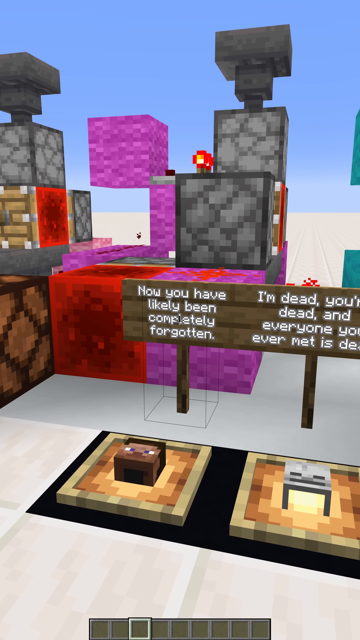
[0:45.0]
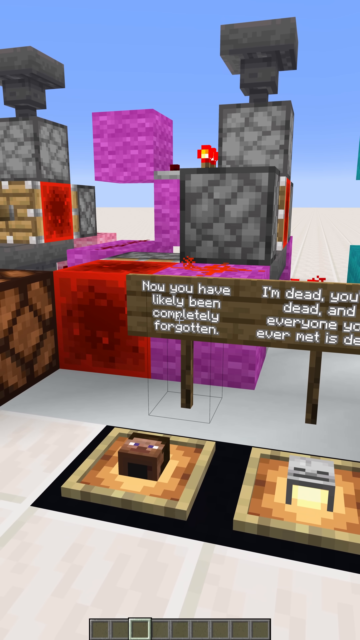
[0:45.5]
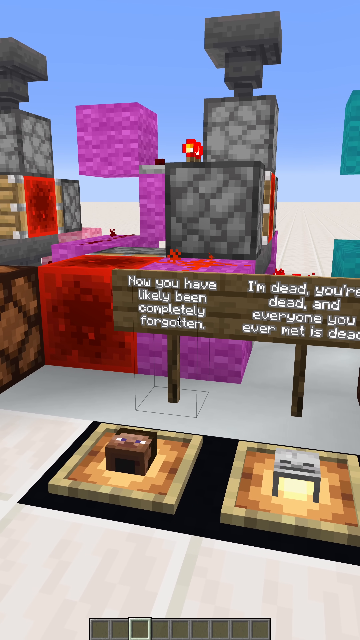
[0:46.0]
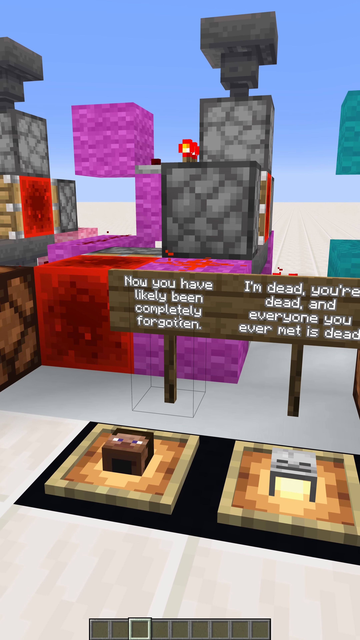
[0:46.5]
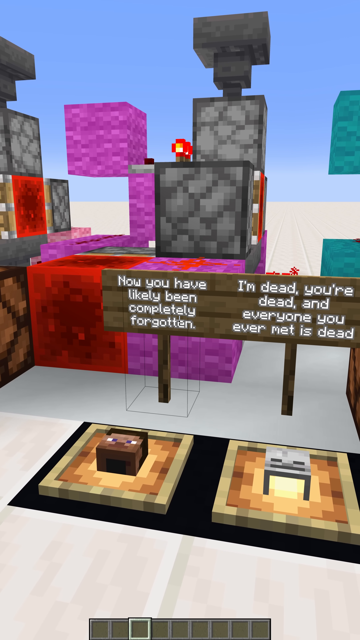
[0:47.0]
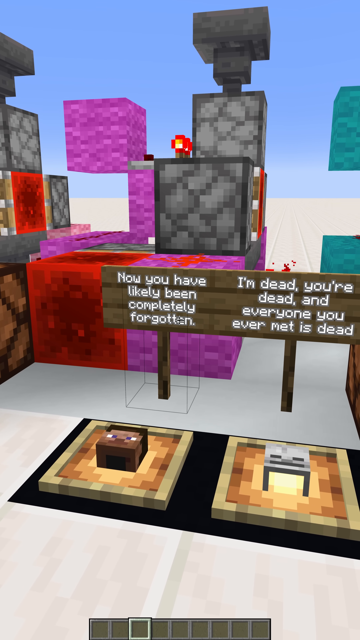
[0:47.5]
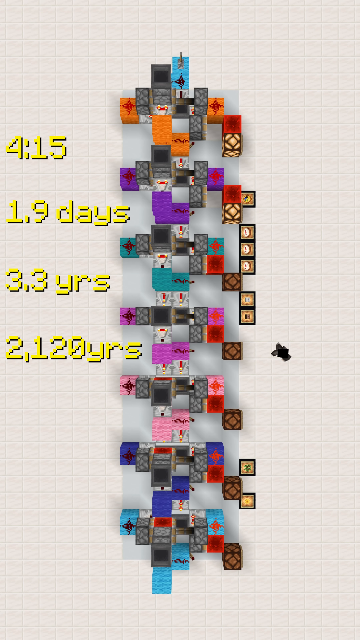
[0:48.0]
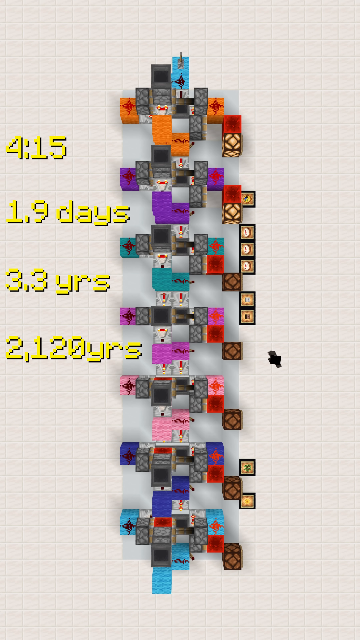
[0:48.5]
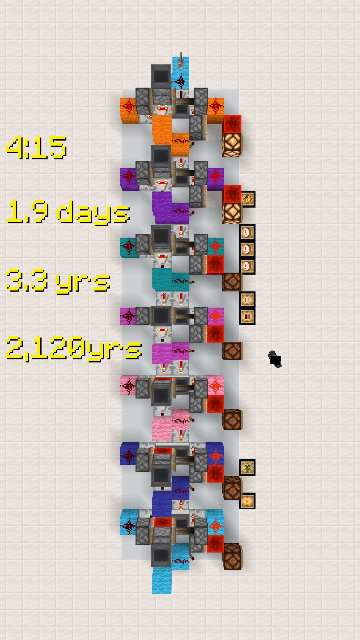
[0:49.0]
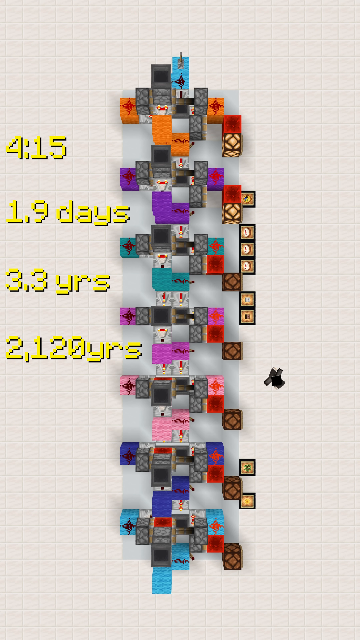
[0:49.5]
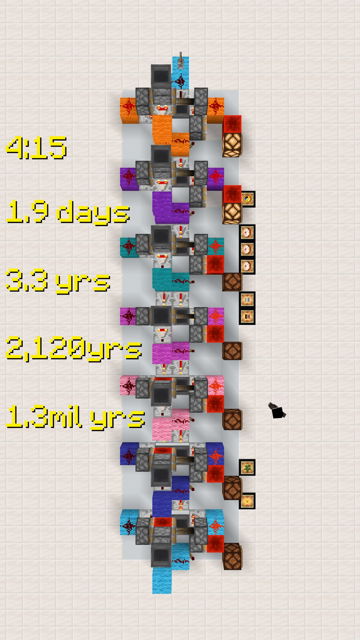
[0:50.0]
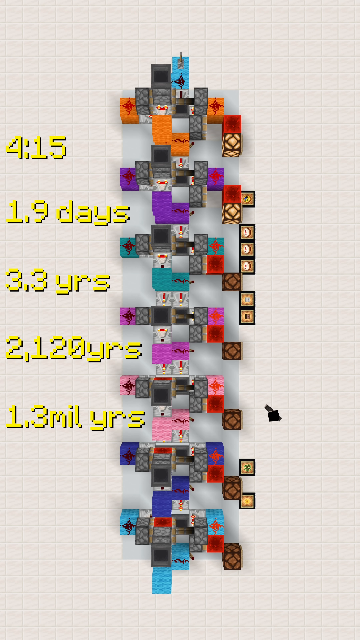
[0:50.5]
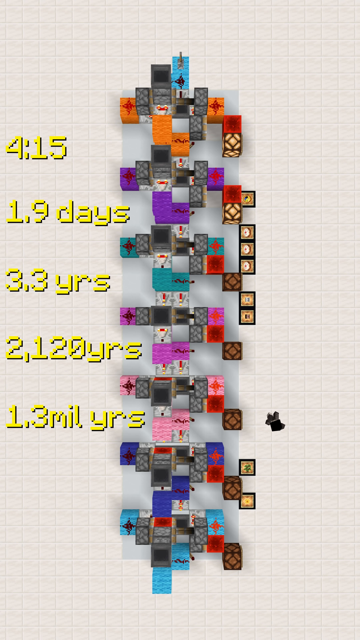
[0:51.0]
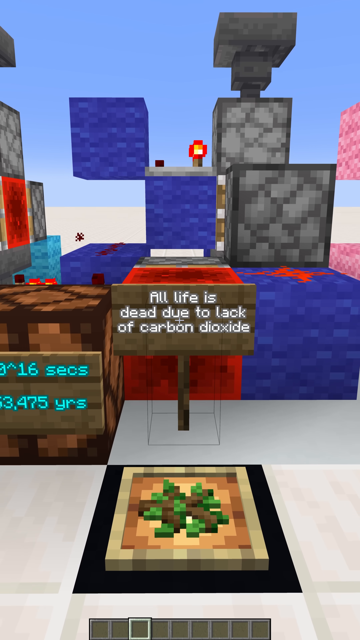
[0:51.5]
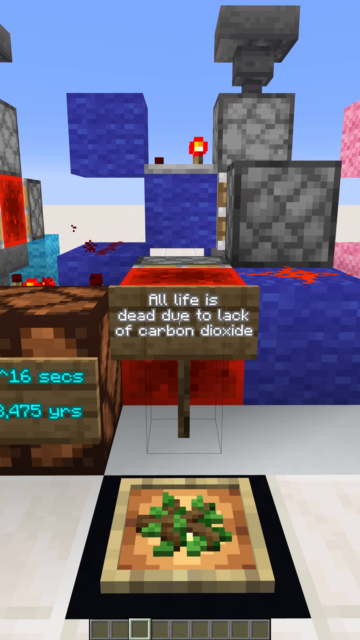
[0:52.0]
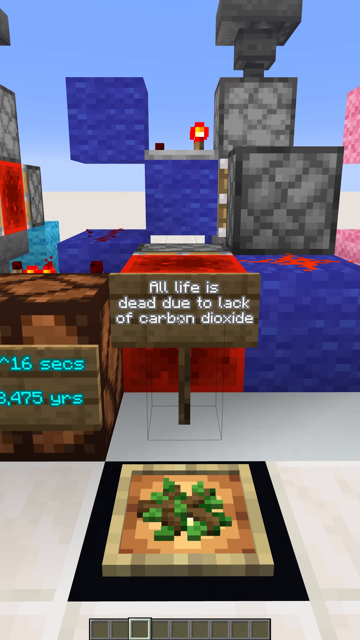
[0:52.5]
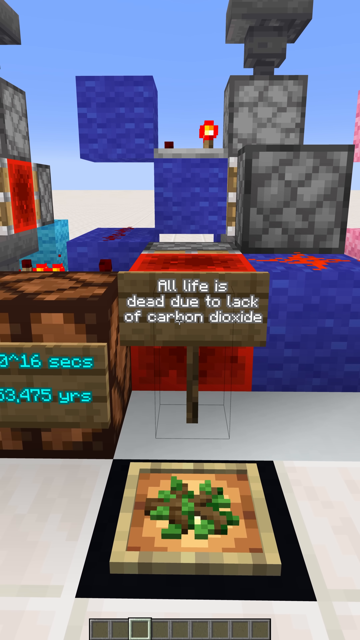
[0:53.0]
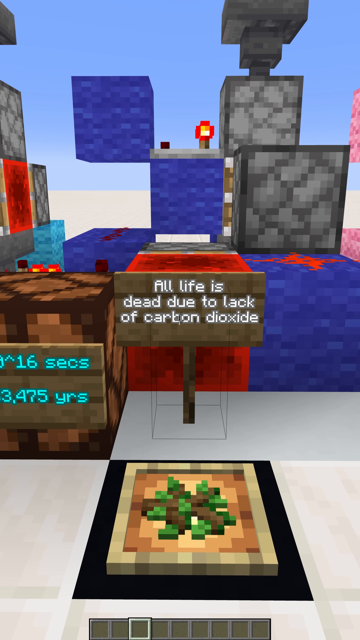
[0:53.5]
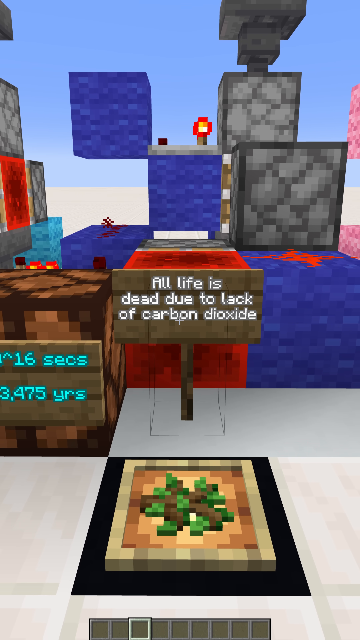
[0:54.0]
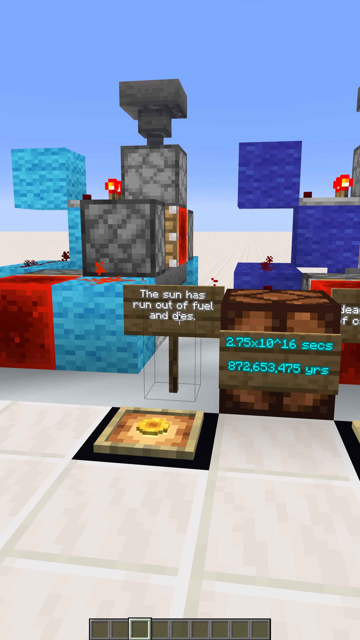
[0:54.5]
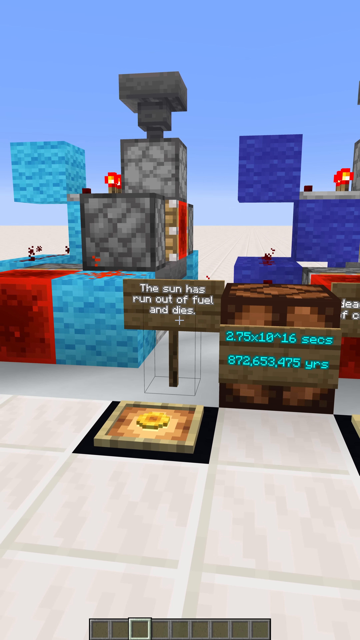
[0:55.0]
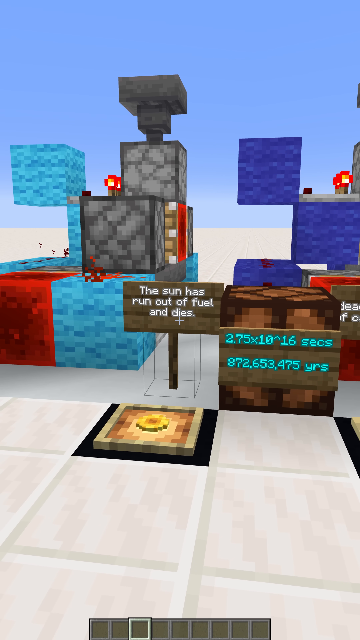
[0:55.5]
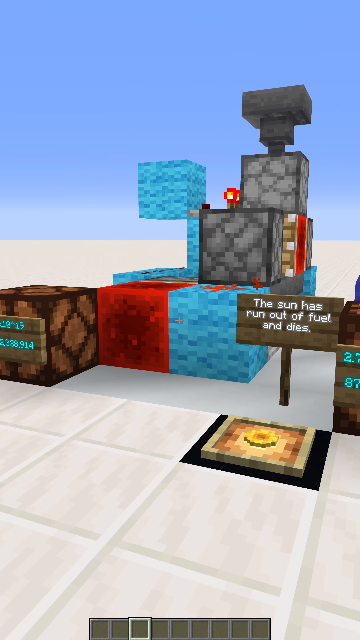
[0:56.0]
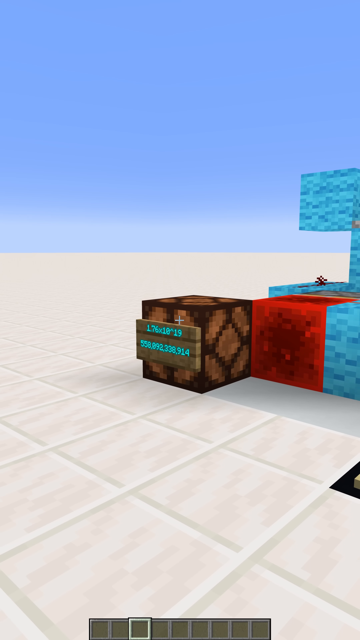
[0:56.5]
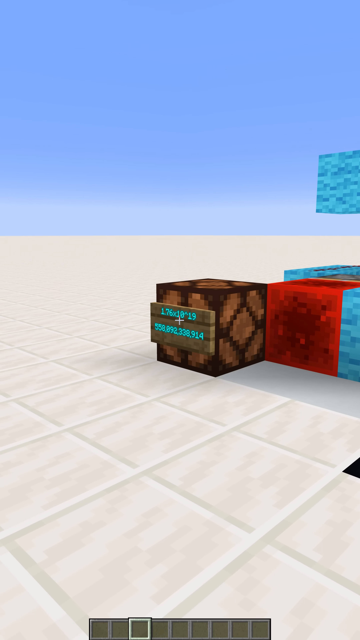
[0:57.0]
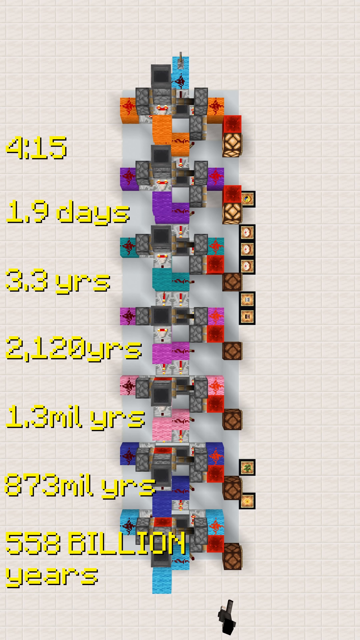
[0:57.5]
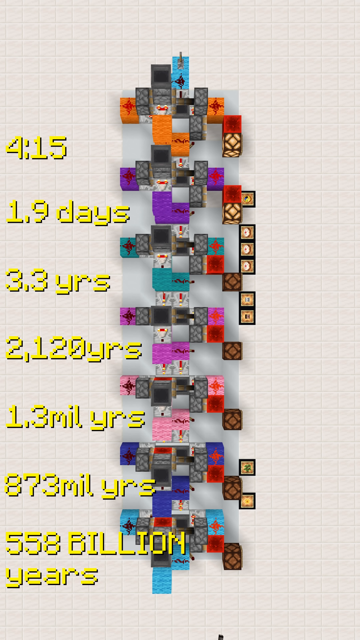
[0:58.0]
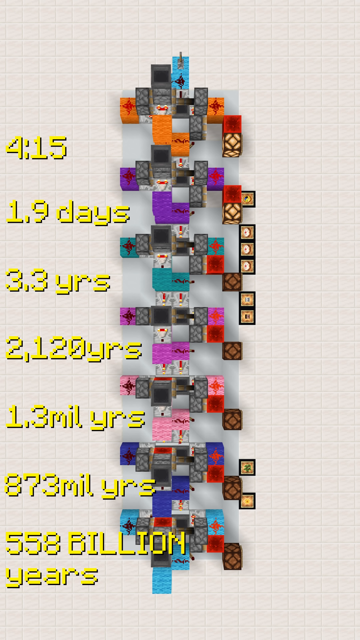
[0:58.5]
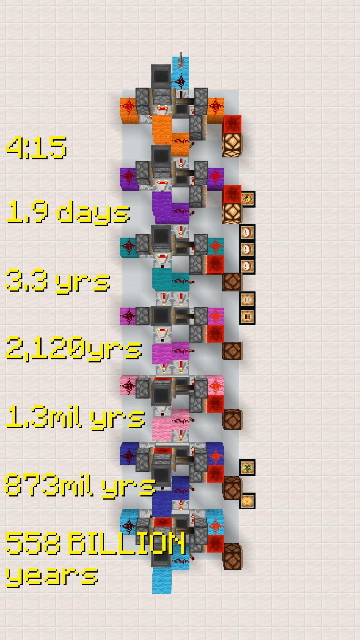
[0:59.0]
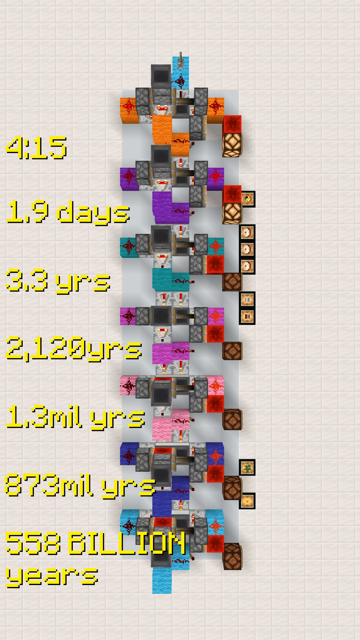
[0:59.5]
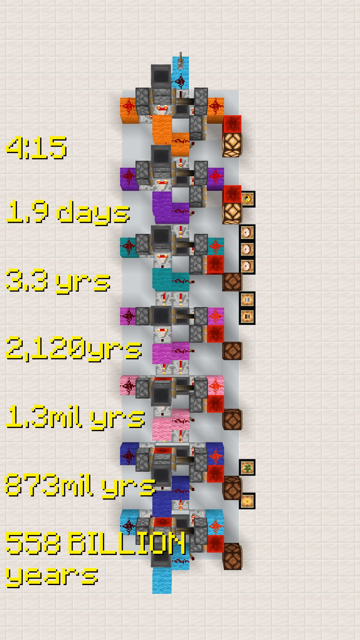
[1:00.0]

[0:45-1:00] The view is back at the signage with the character, then goes overhead, showing the character moving about and appearing to decide what strategy to take. On the side, numbers appear vertically: "415", "1.9 days", "3.3 years", "2,120 years" and "1.3 million years". The character walks on the opposite side of the blocks, taking easy, cautious steps, then turns toward the blocks and the signage and looks, then continues to walk, turns, stops, turns and looks. Another view follows as if through the character's eyes, showing the signs: one beginning "my life is dead due to", apparently warning the character not to enter, along with "now you have likely been completely forgotten" and "I'm dead, you're dead, and everyone you ever met is dead". On the floor beneath the signs are faces on squares, like plaques; one looks like a brown face and the other like a gray face. They face upward, so their expressions cannot be made out.